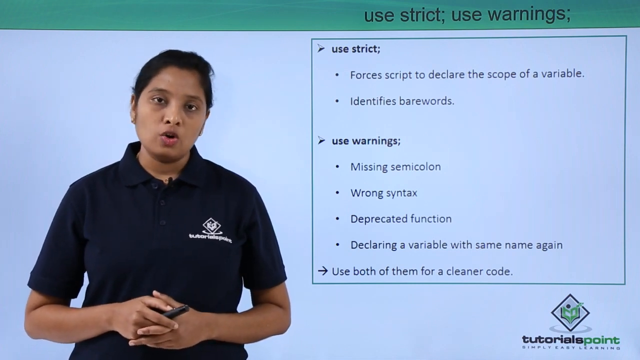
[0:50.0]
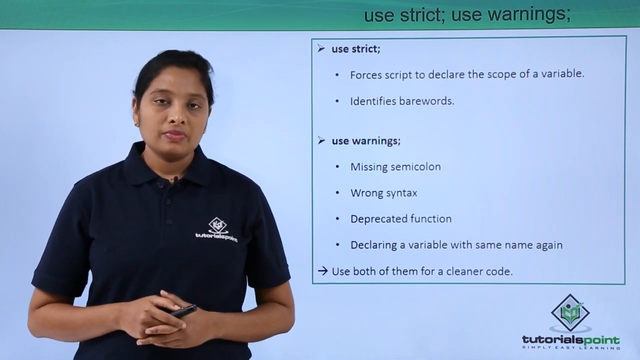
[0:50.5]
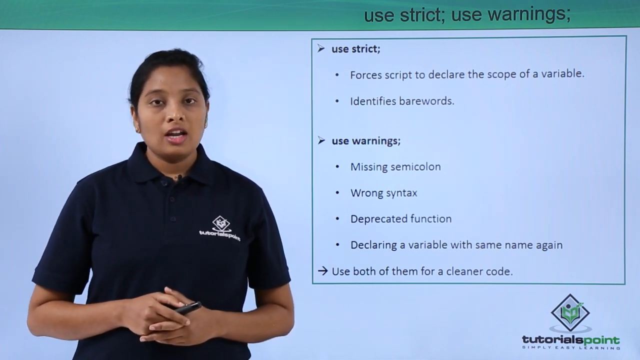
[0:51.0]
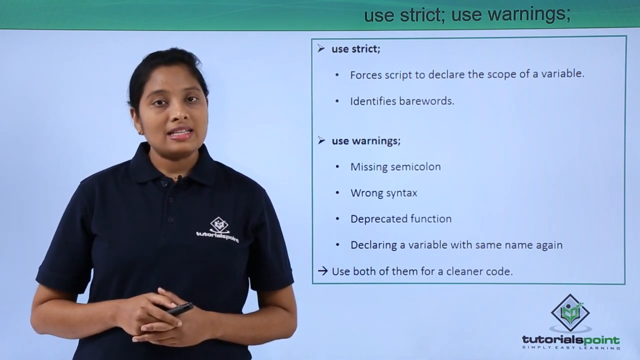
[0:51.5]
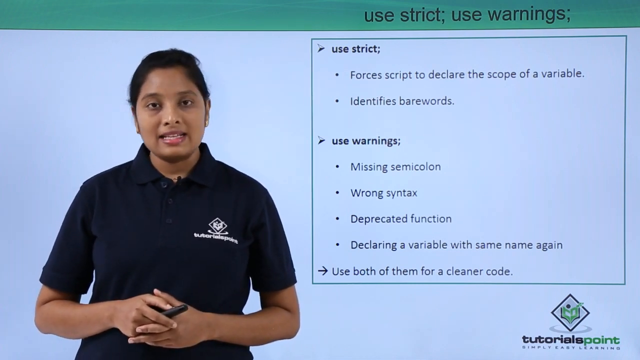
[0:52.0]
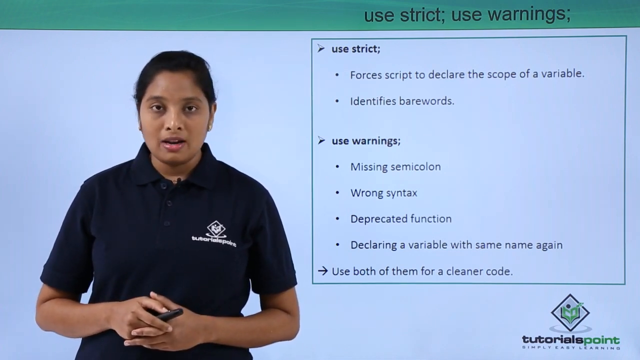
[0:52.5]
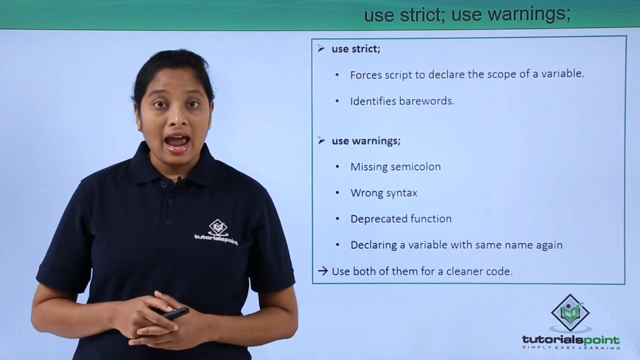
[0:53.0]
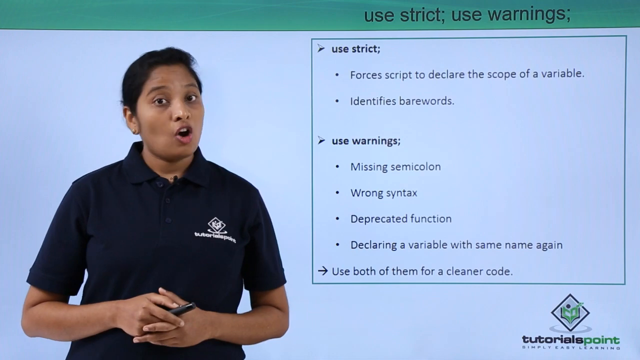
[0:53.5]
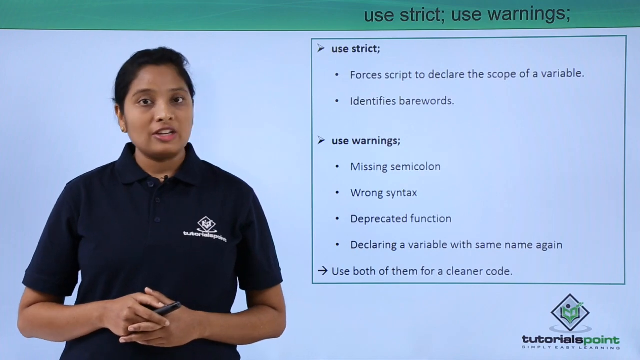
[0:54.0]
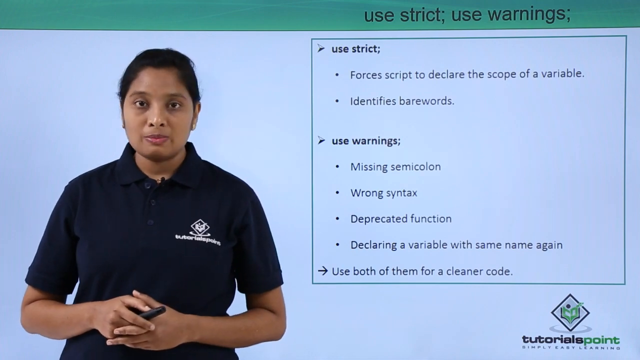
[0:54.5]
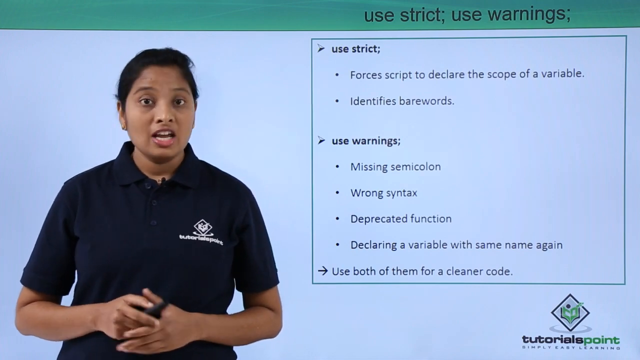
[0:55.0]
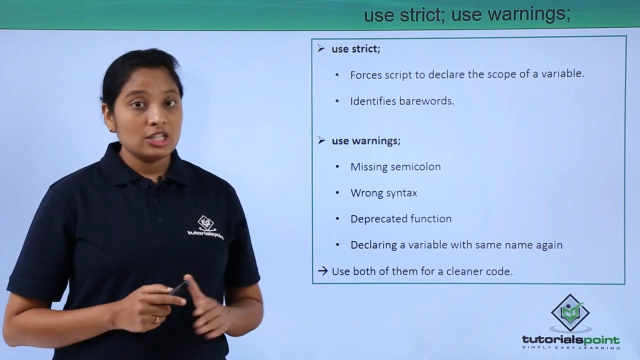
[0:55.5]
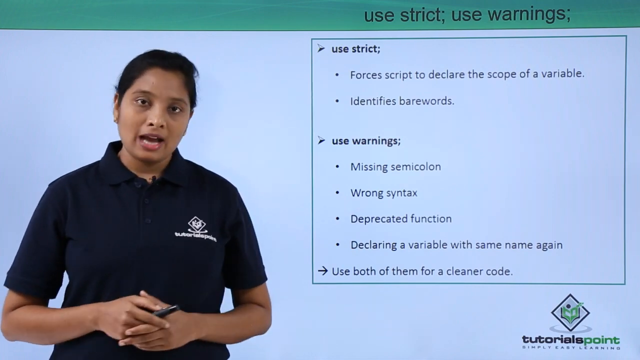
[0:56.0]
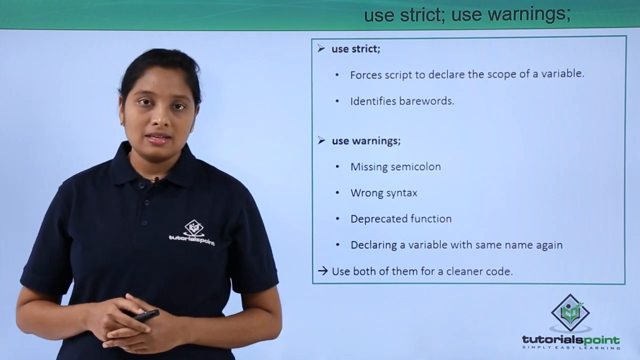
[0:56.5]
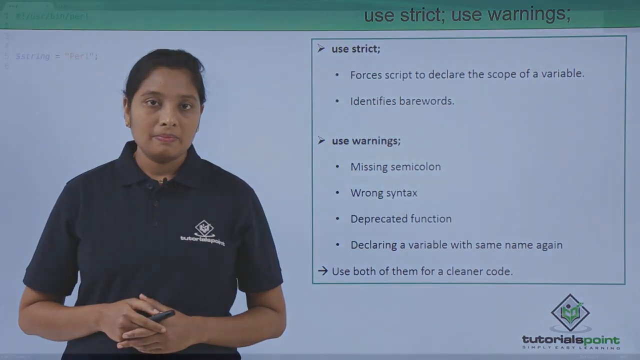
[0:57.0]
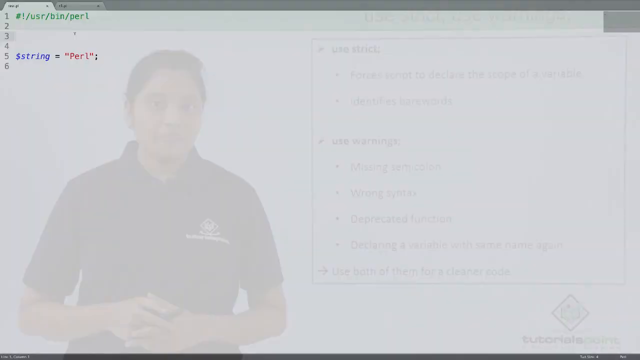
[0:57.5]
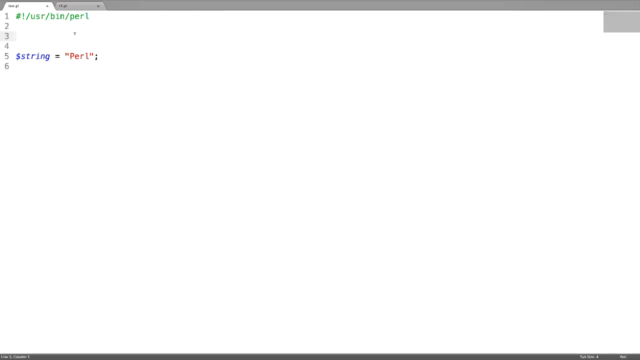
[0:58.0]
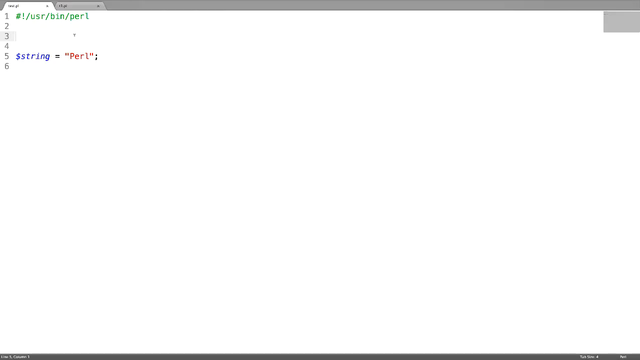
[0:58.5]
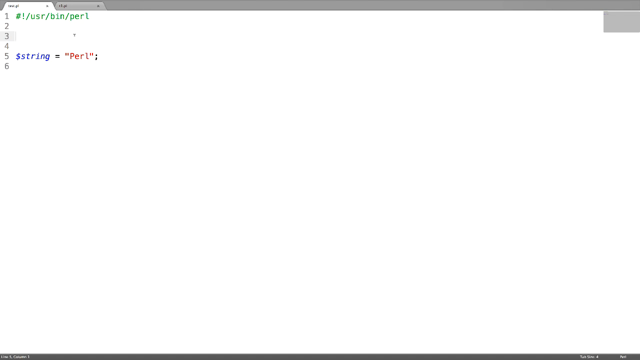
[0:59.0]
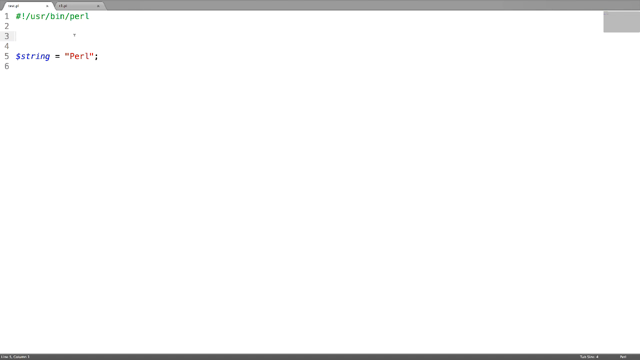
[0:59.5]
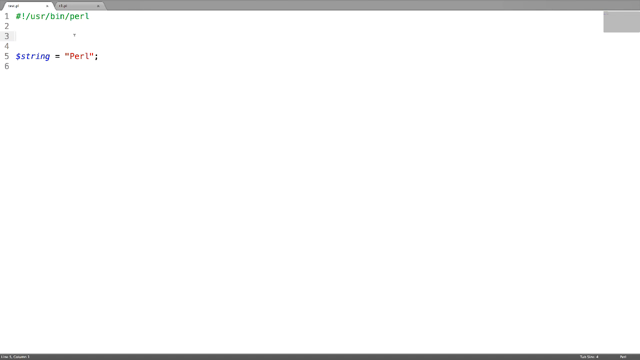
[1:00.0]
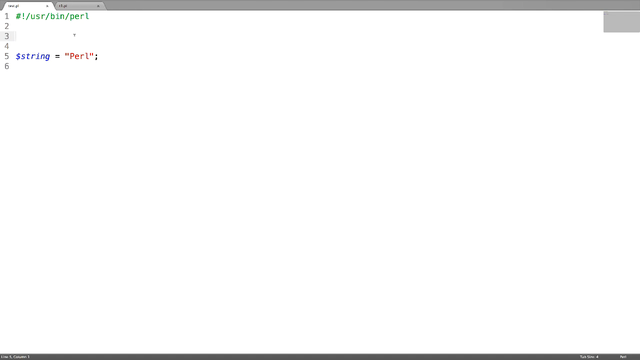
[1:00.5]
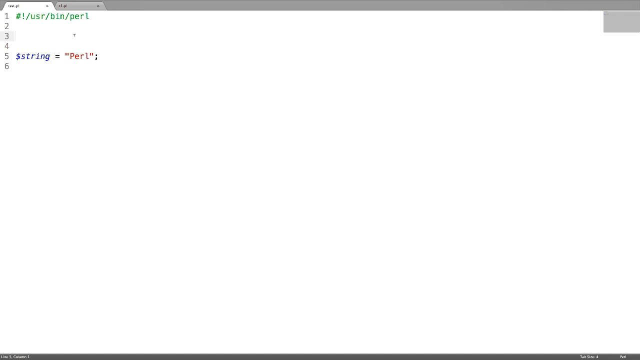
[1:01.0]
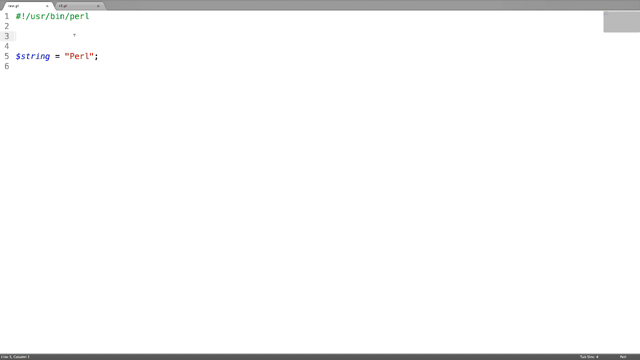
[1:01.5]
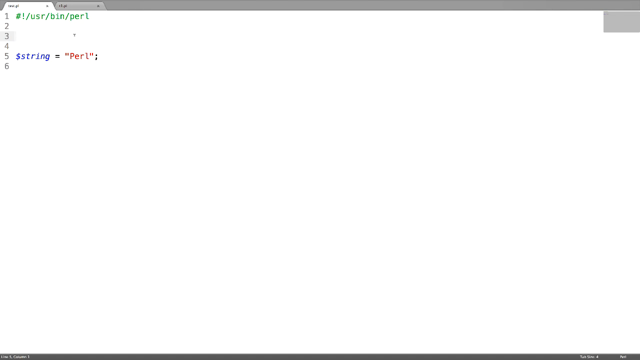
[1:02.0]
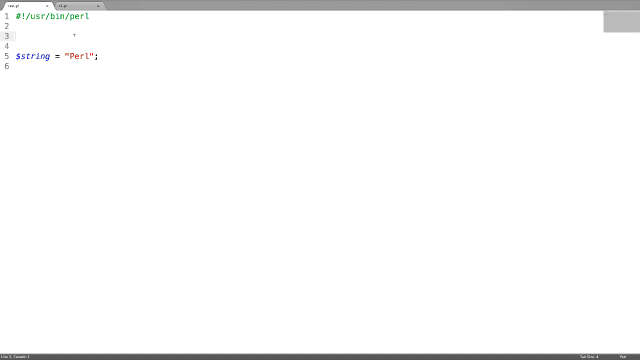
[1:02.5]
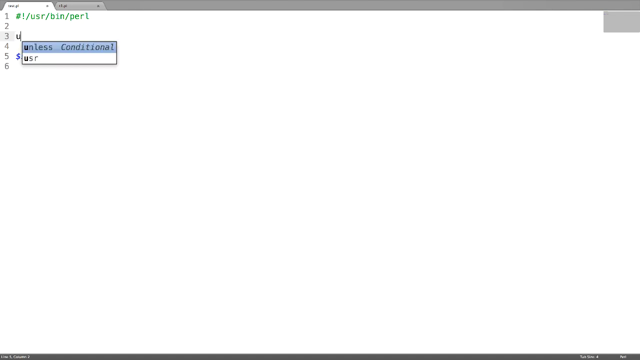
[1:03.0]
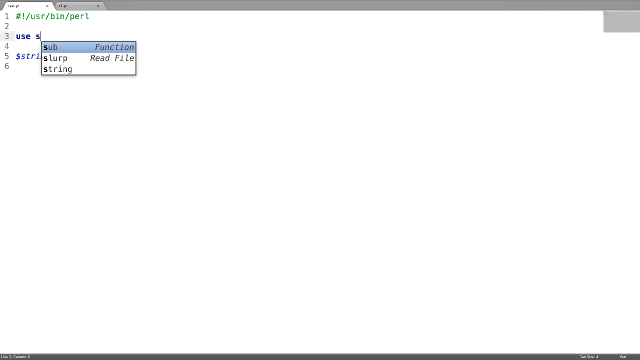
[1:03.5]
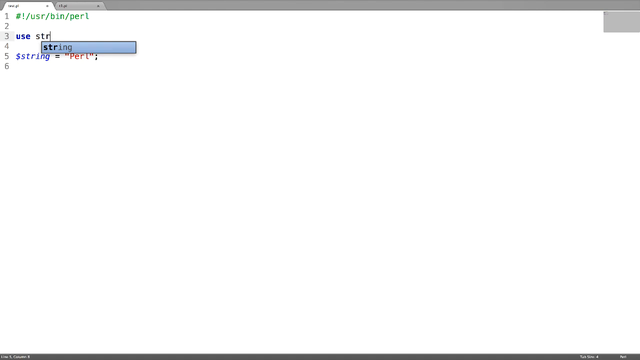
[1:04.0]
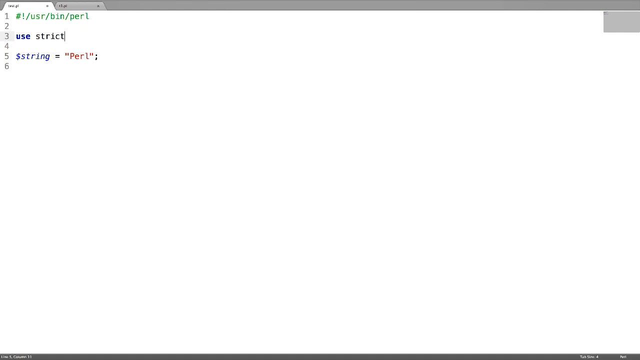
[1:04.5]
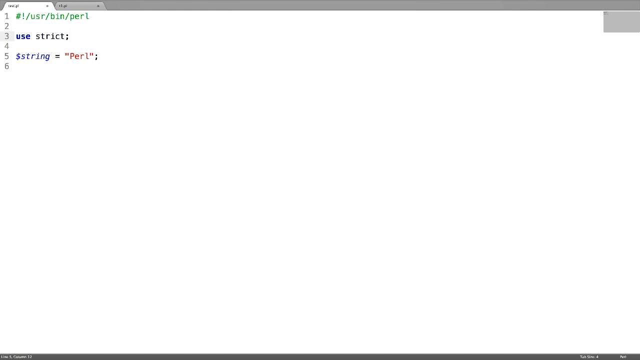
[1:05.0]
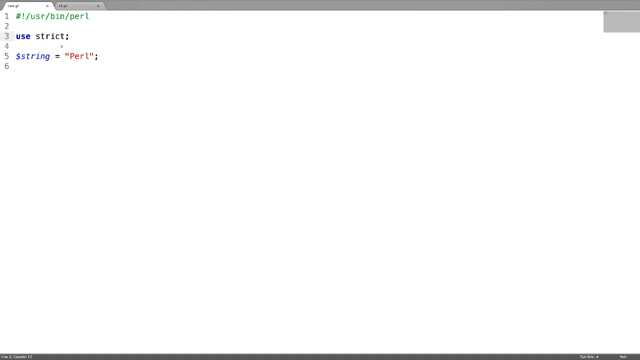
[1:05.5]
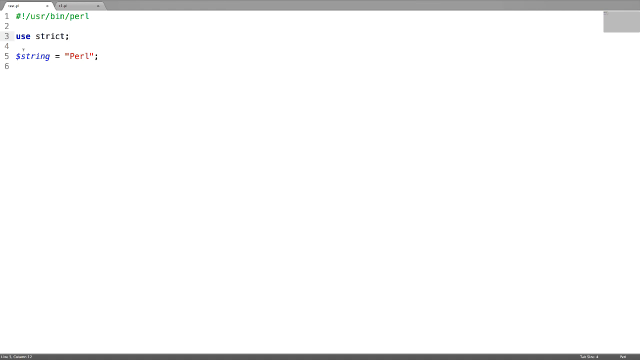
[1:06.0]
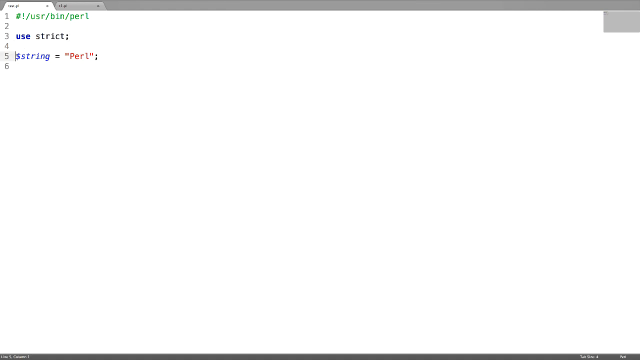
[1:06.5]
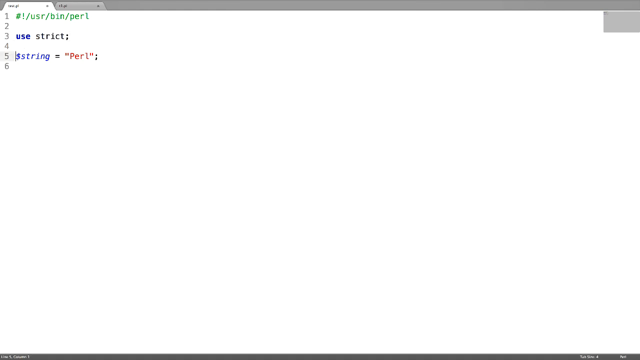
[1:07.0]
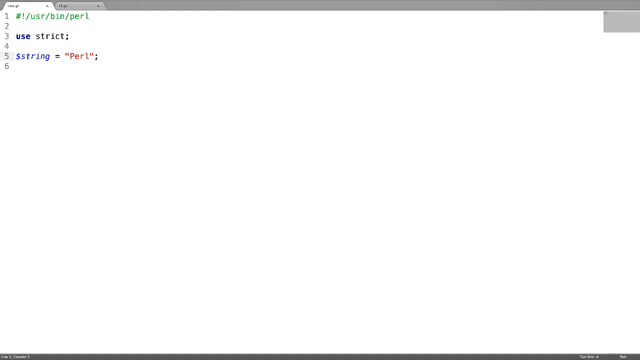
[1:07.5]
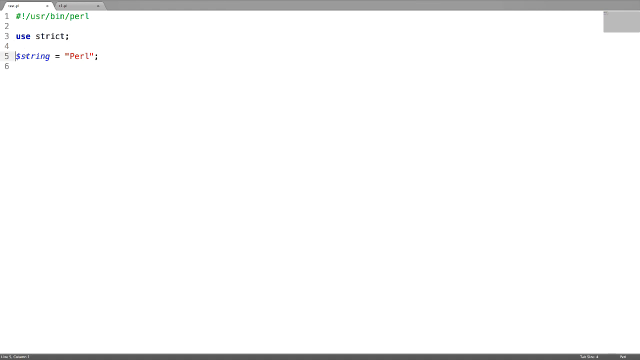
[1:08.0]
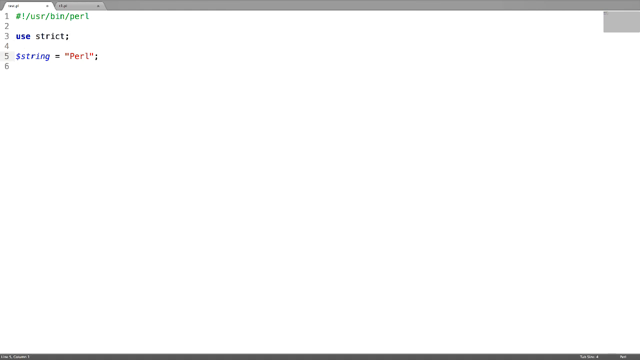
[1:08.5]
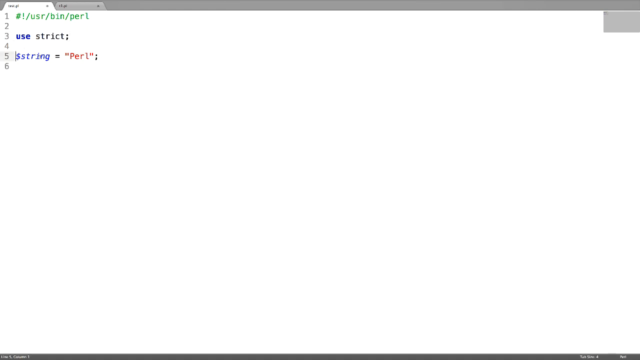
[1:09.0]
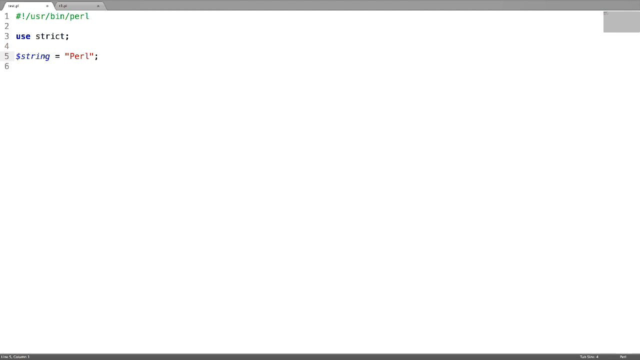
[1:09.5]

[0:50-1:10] The view stays on the words inside the blue-outlined box on the right side of the screen, now focusing on the lower portion of the box. In bold purple letters it reads "use warnings;". Underneath, the bullet points read "missing semicolon", "wrong syntax", "deprecated function" (written in purple) and "declaring a variable with same name again" (written in purple). Below, a small dark purple arrow inside the blue box points toward the right side of the screen, and next to it purple text reads "Use both of them for a cleaner code." In the lower right corner of the screen is a diamond-shaped logo.